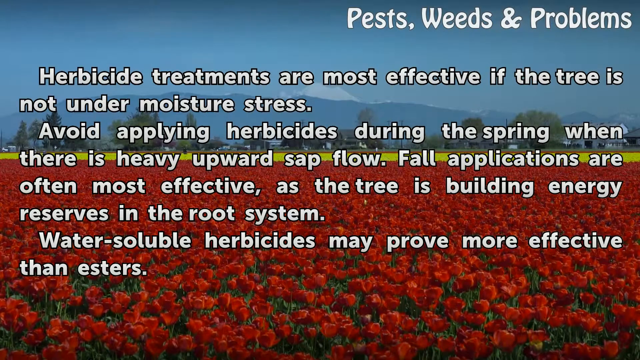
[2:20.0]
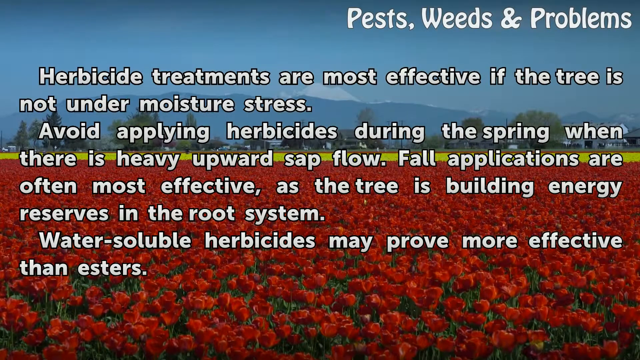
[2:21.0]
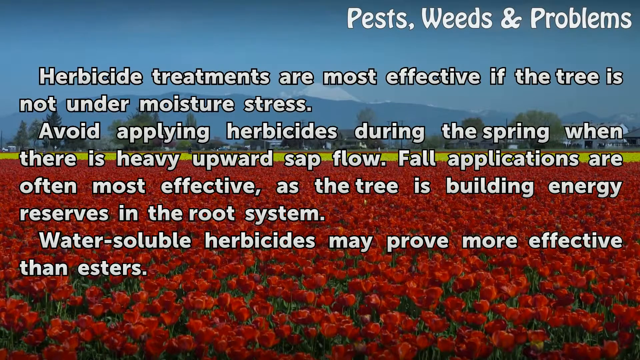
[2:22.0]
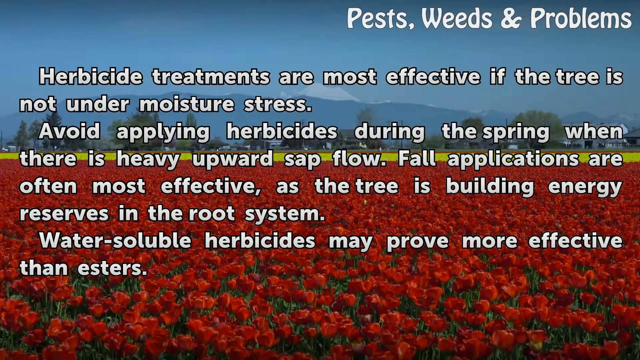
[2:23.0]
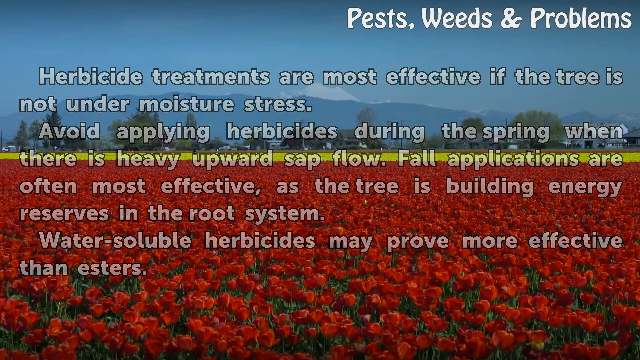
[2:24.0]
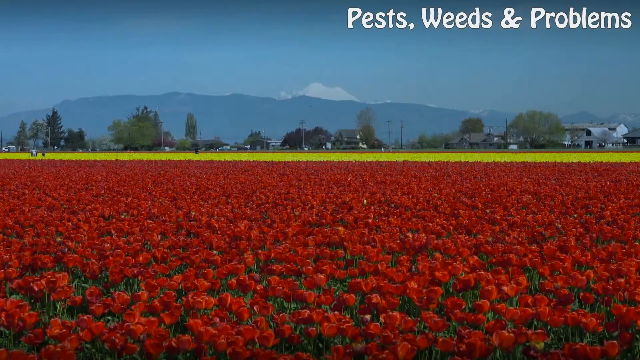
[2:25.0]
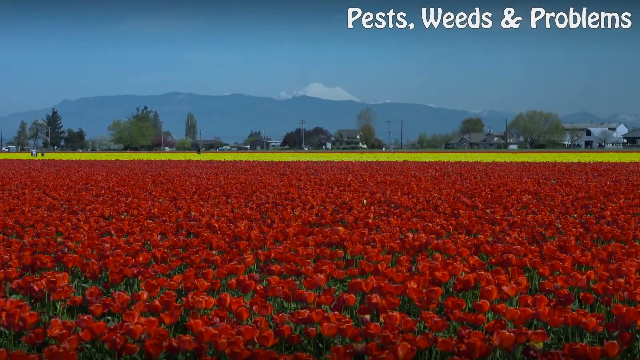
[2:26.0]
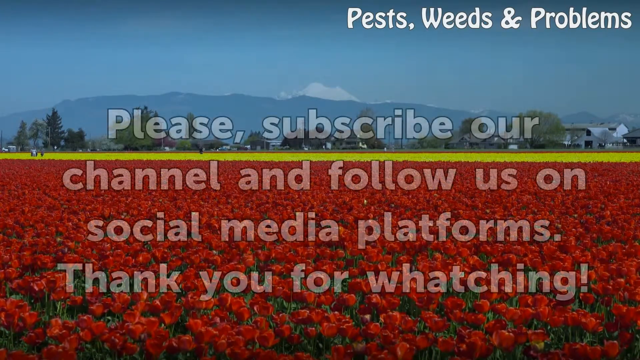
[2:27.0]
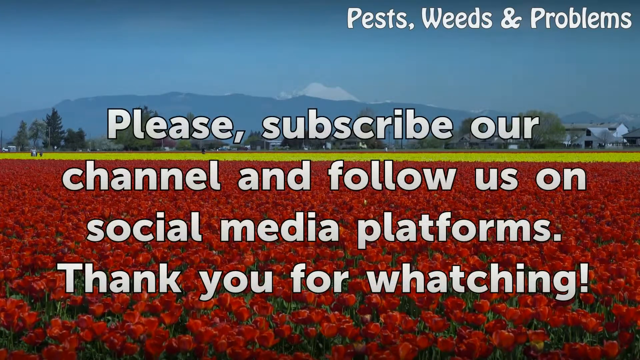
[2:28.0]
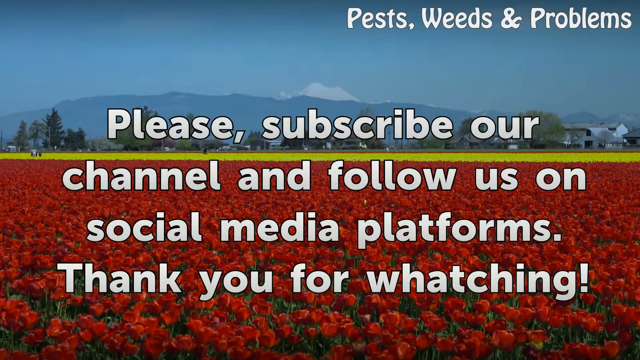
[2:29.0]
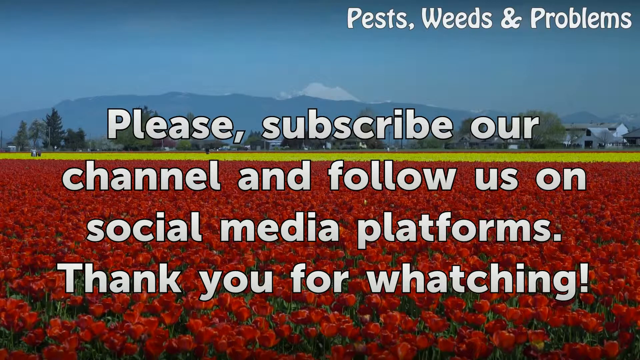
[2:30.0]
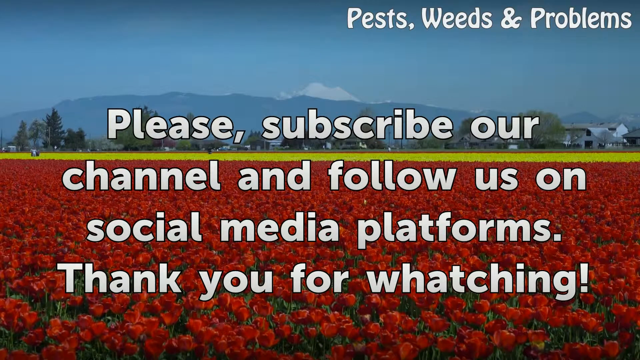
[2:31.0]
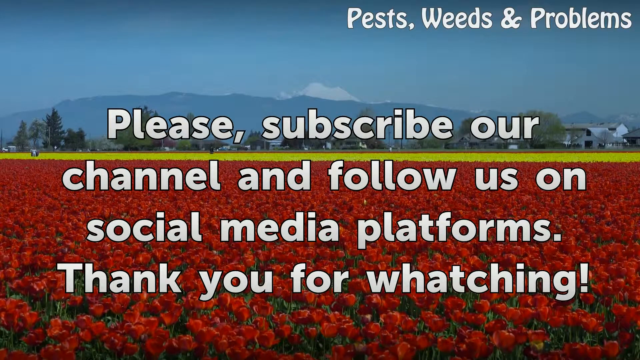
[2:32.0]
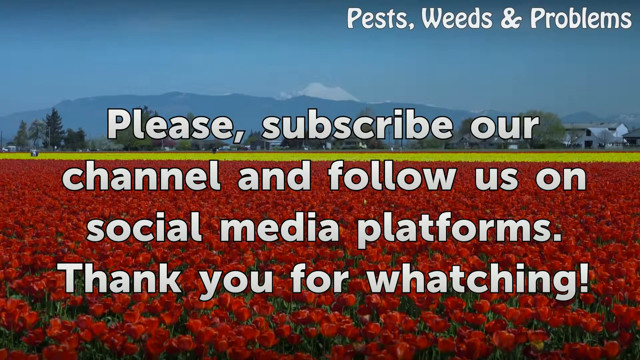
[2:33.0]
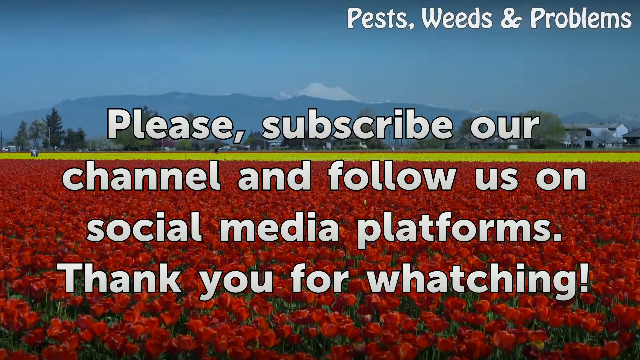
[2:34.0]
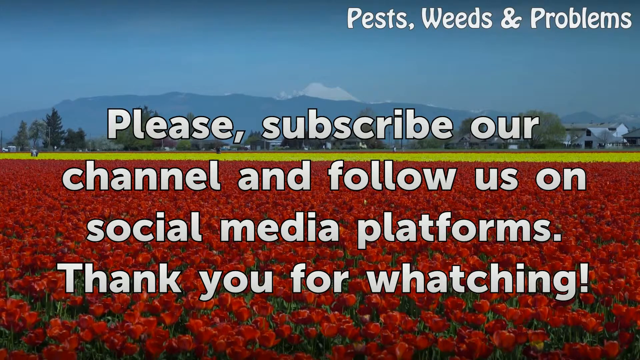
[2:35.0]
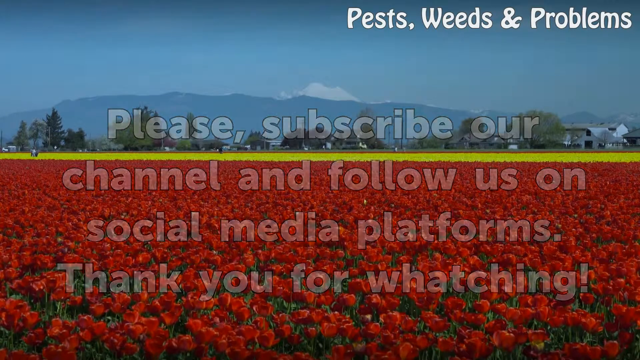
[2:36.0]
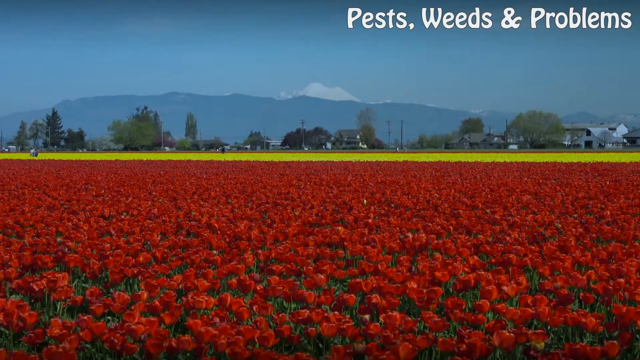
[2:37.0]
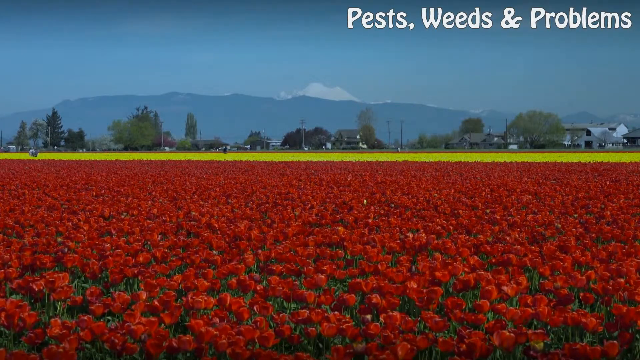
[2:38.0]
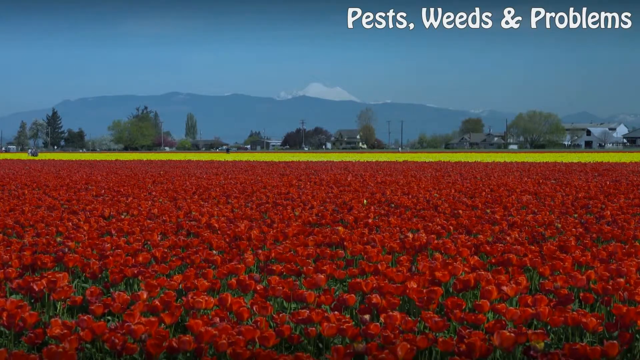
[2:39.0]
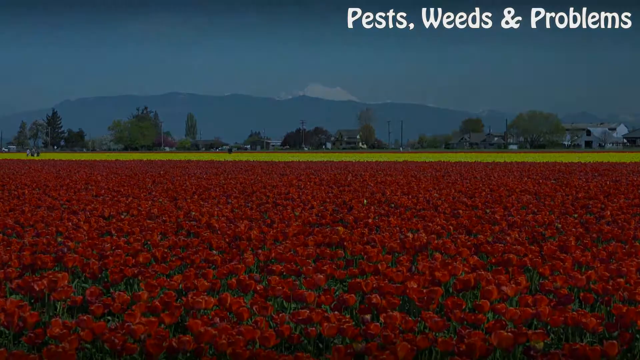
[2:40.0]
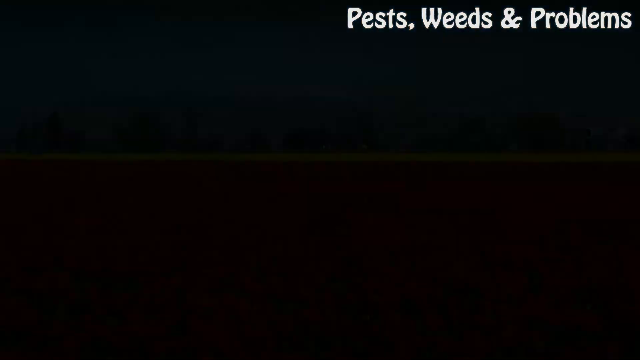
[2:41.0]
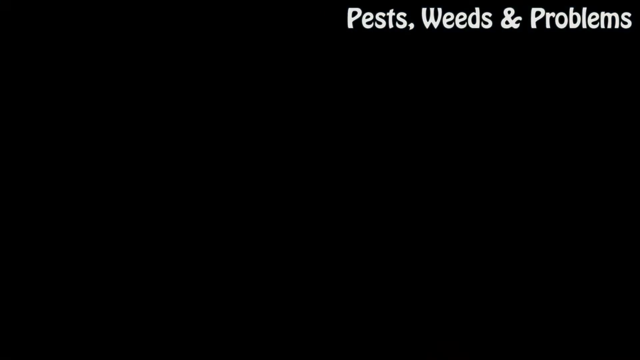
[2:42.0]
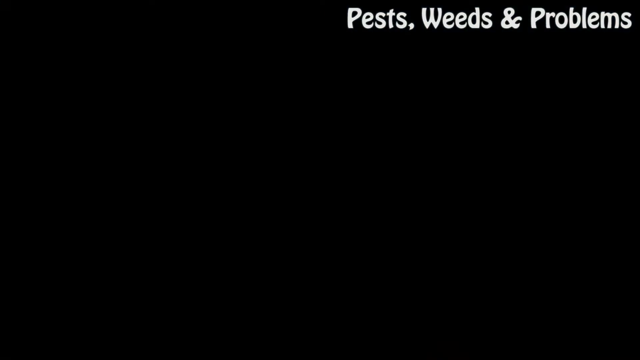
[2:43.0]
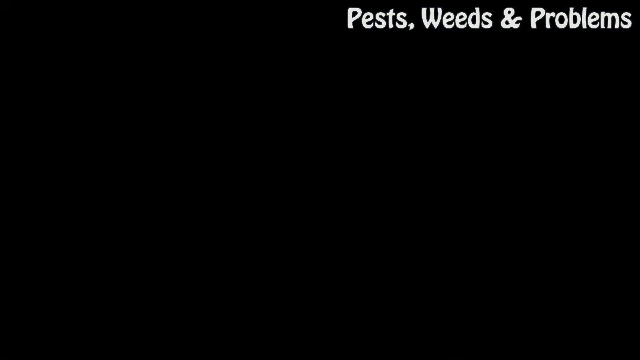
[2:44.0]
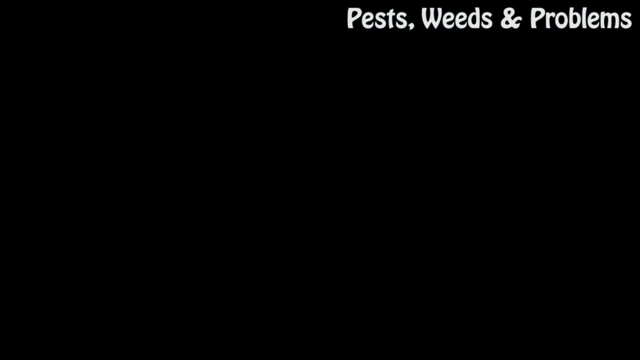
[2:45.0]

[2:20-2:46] In the upper right-hand corner are the white words "pests, weeds and problems". The section text reads "herbicide treatments are most effective if the tree is not under moisture stress. Avoid applying herbicides during the spring when there's heavy upward sap flow. Fall applications are often most effective as the tree is building energy reserves in the root system. Watered-down soluble herbicides may prove more effective than ESTERS." Those words disappear, and in a bigger font, across several lines, text reads "please, subscribe our channel and follow us on social media platforms." Then text reads "thank you for whatching", spelled with an extra H.